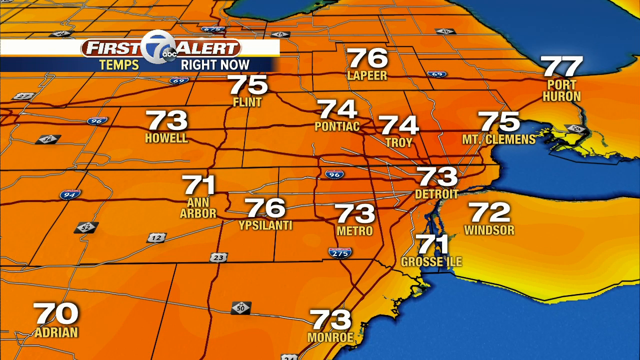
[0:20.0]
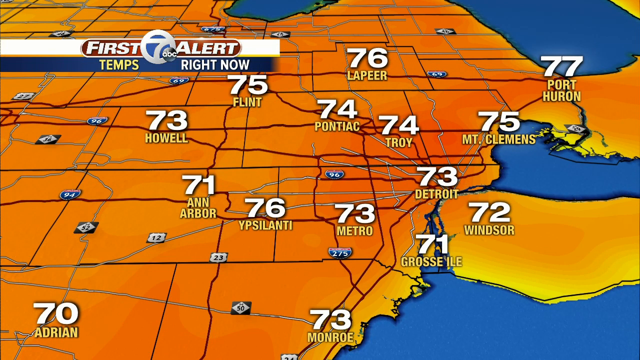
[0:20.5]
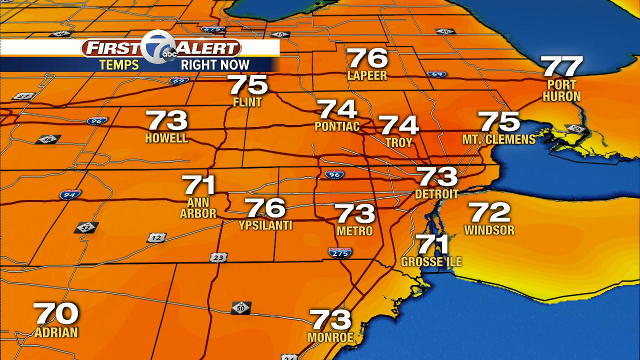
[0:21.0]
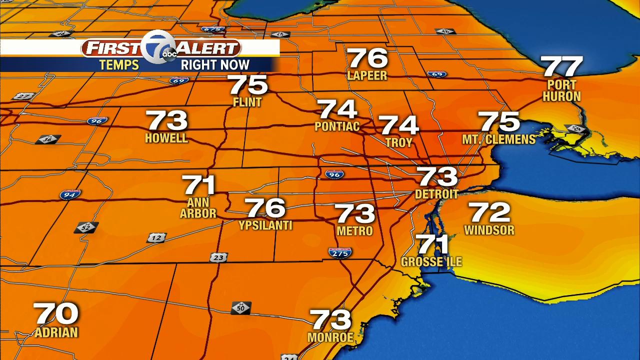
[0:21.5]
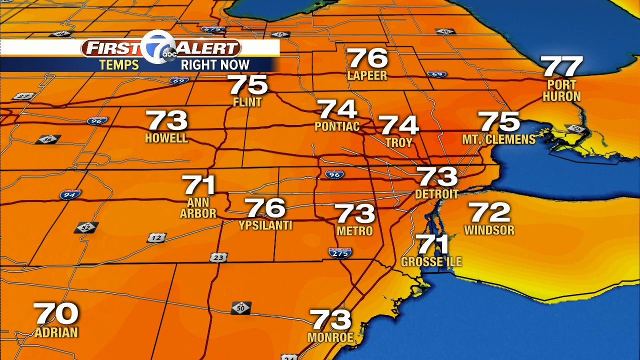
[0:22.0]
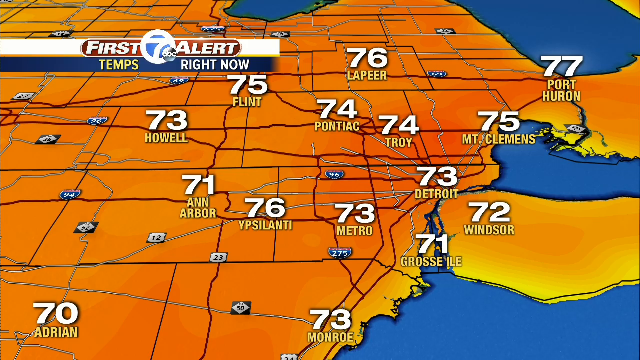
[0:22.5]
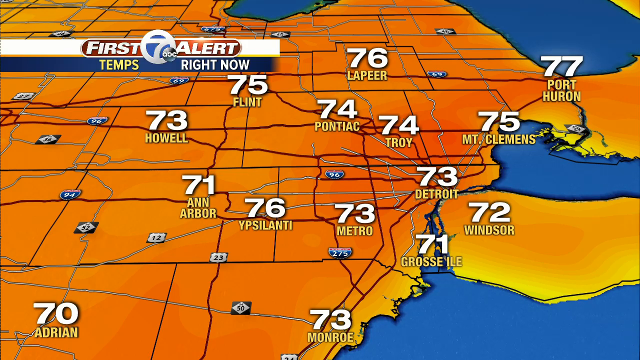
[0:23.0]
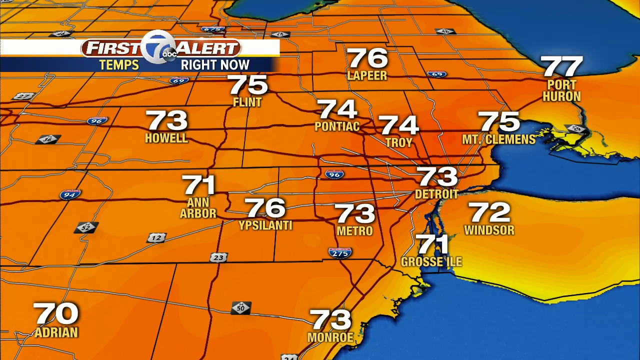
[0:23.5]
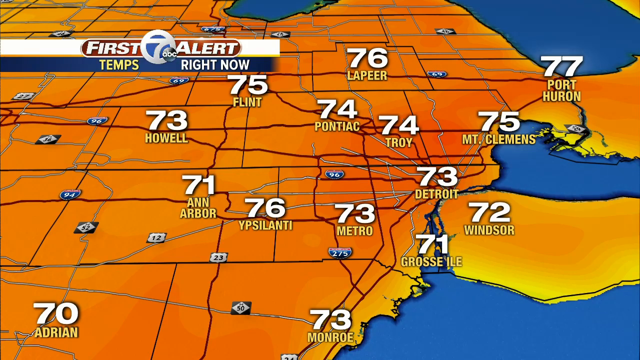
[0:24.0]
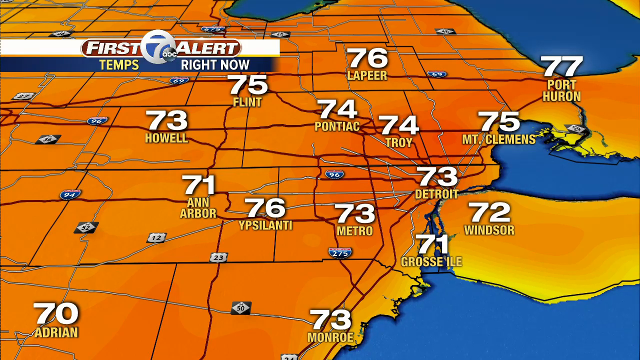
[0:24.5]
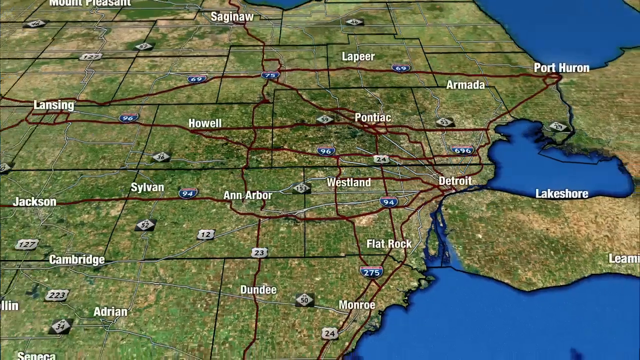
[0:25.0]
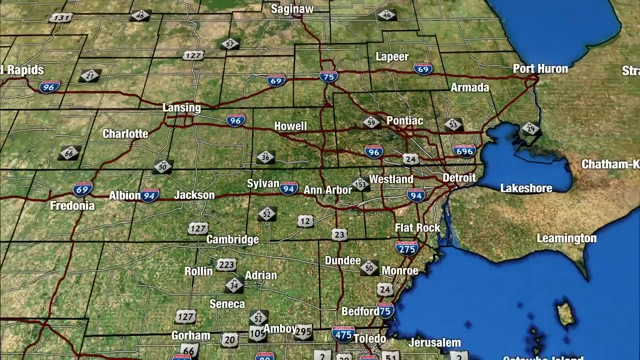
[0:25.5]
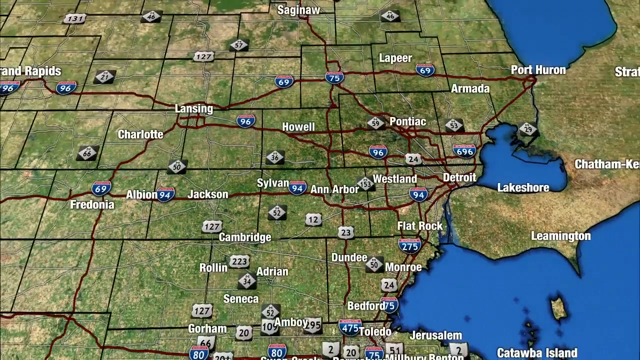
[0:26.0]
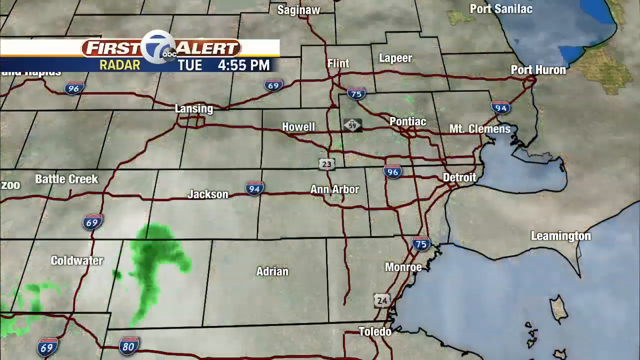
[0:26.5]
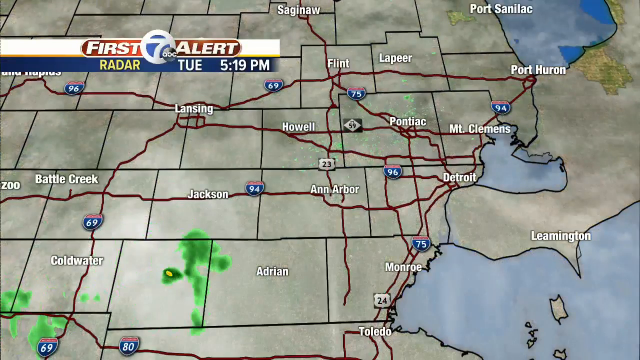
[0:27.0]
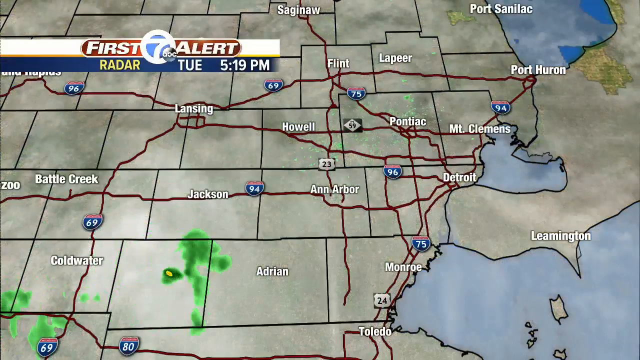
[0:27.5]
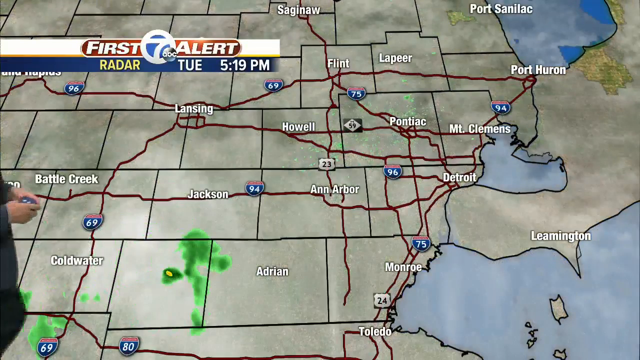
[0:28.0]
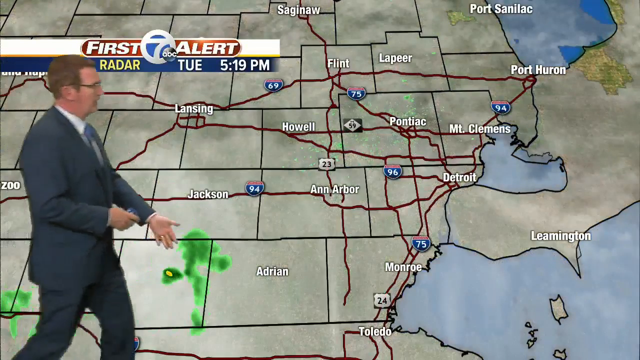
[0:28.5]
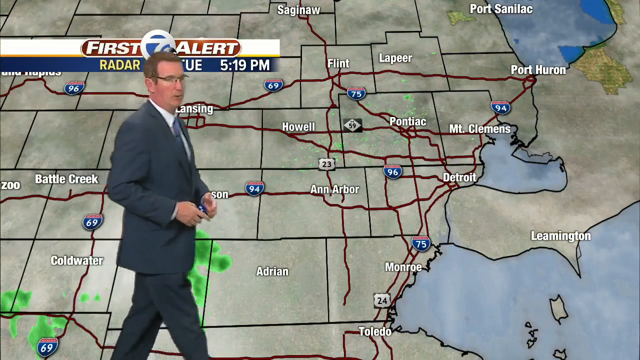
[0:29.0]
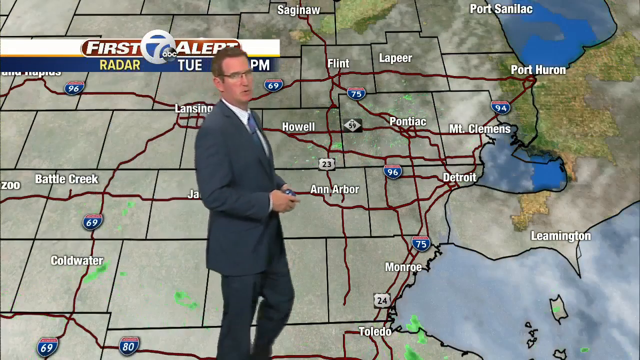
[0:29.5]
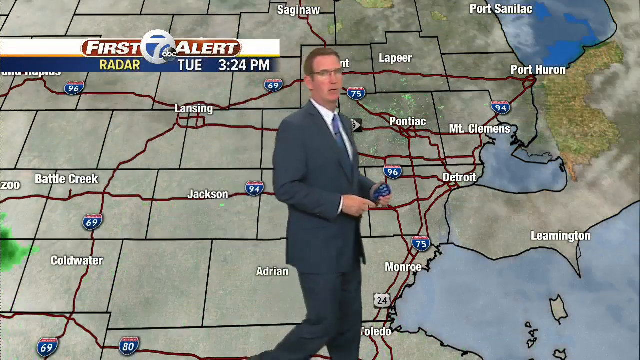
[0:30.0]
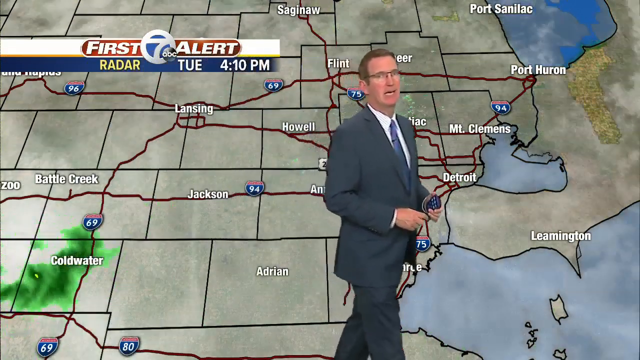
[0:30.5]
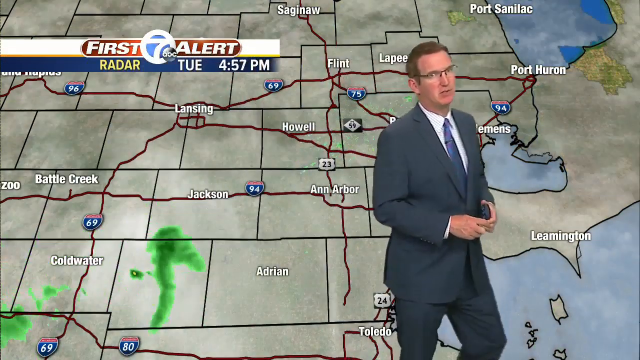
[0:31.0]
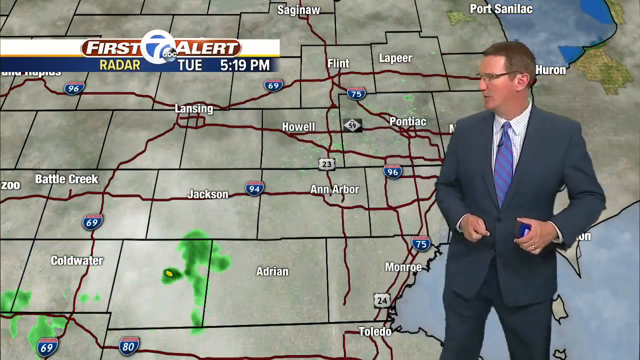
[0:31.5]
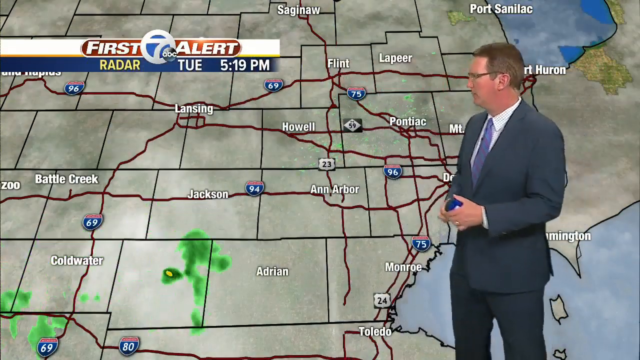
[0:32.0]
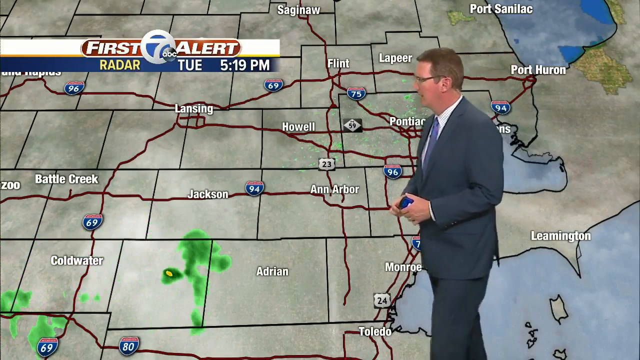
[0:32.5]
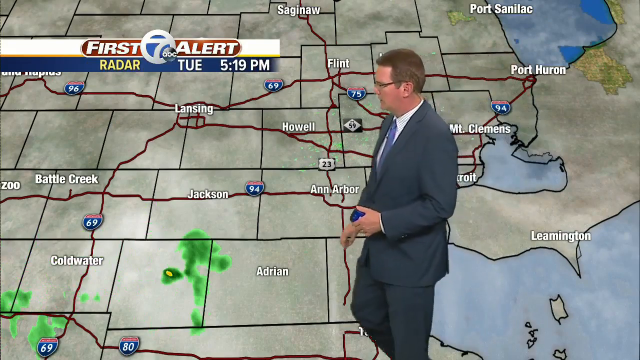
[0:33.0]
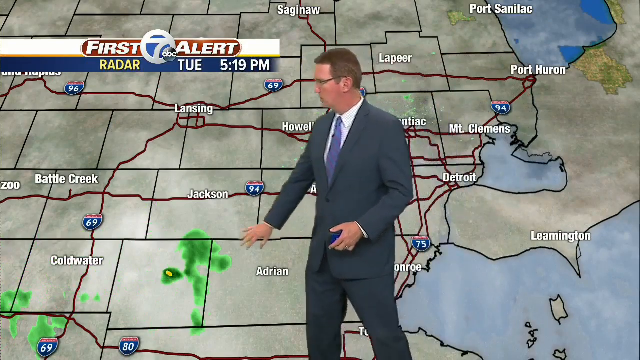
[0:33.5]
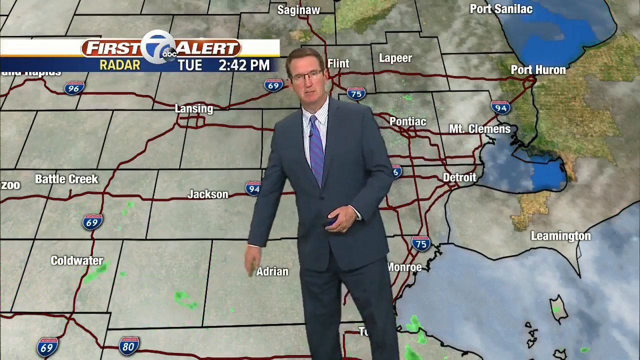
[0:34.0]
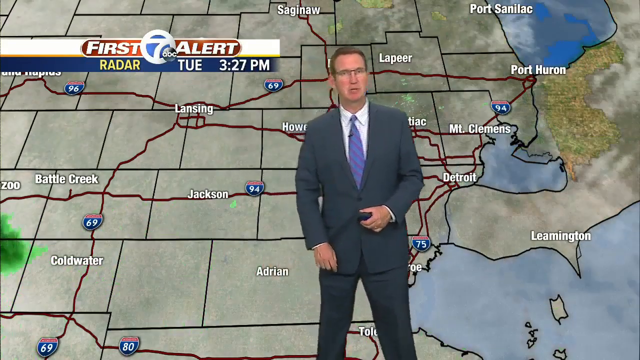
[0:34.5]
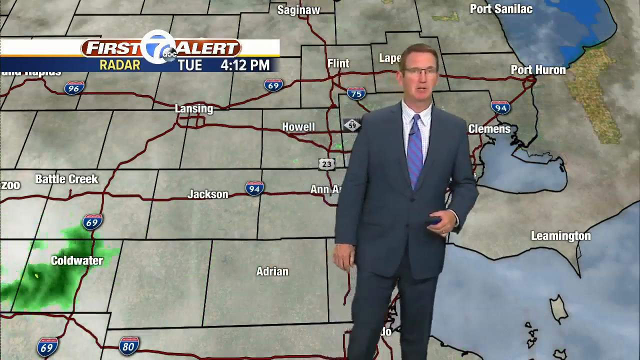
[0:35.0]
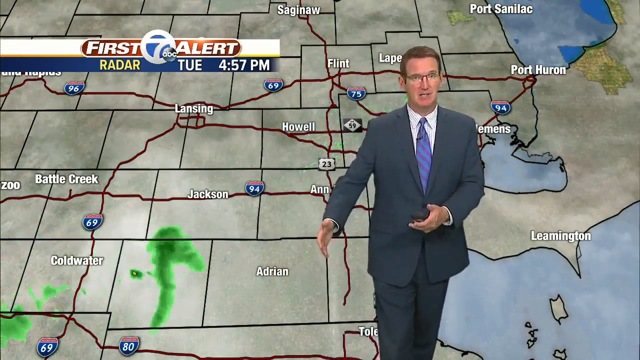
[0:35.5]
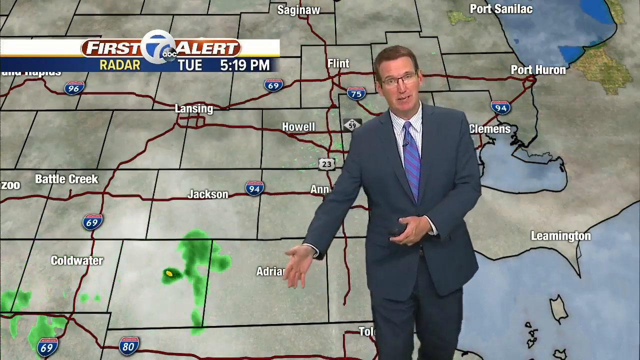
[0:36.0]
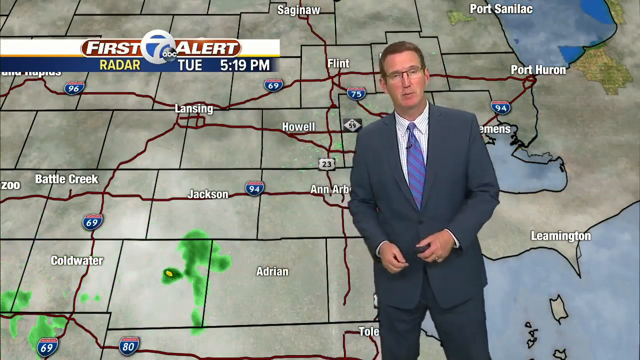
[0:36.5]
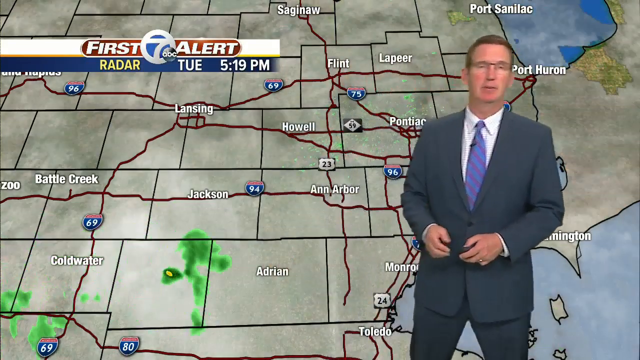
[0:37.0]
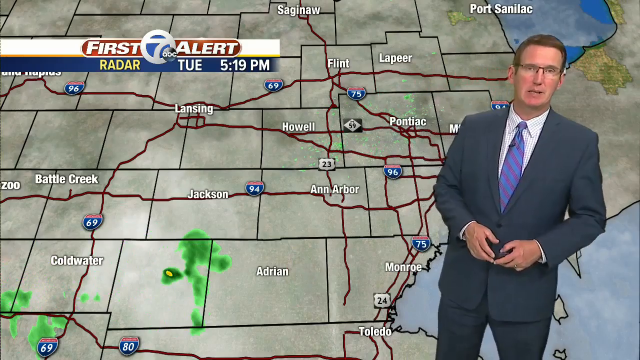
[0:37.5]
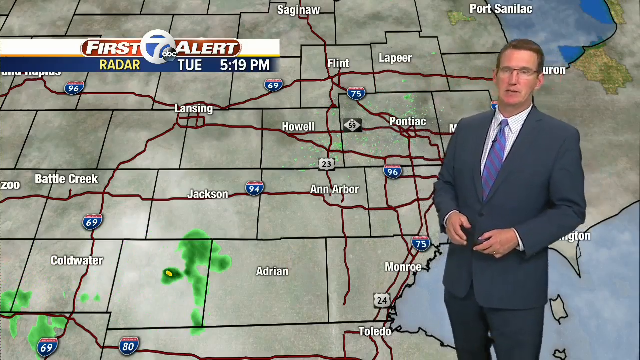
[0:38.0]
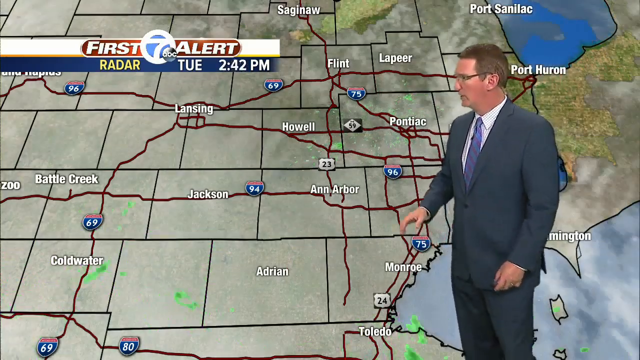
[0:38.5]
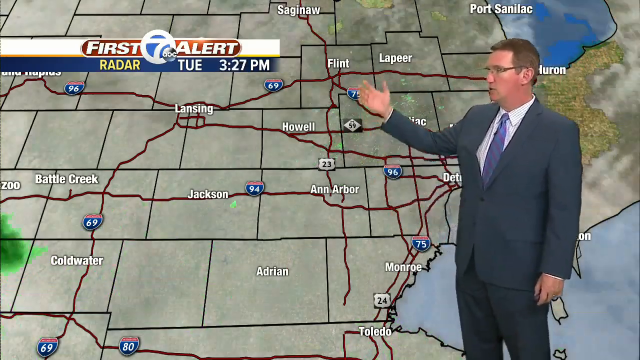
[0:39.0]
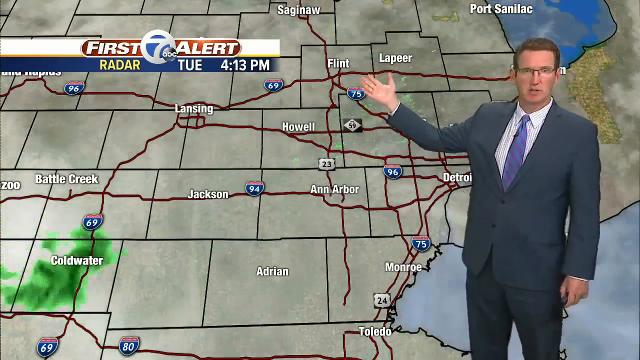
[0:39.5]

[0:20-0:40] The first alert temps right now display shows hot weather. An aerial view appears with a man in a blue suit showing the movement of the weather and pointing at what is coming on Tuesday. The surface of the map is orangey red, with blue color representing water. High weather alerts are shown as the man focuses on them and navigates around the forecast to show different towns, where the weather is clear except on the southwest side, where there seems to be fog.